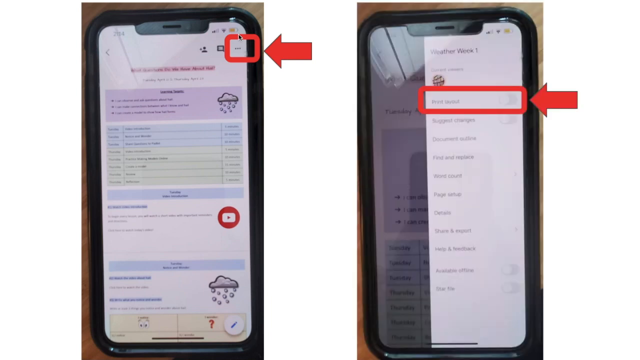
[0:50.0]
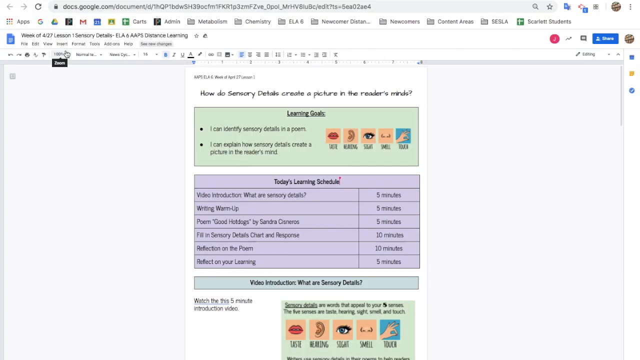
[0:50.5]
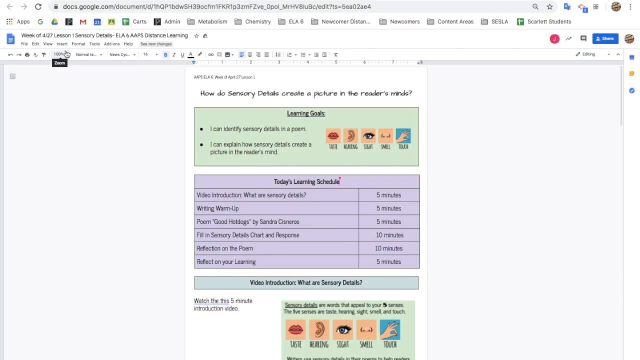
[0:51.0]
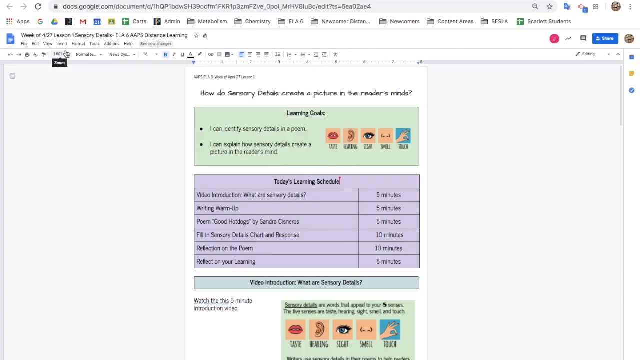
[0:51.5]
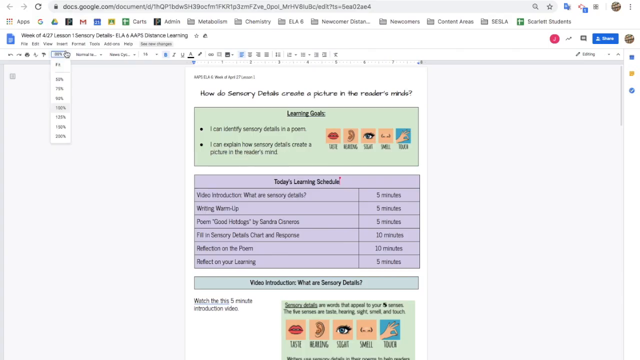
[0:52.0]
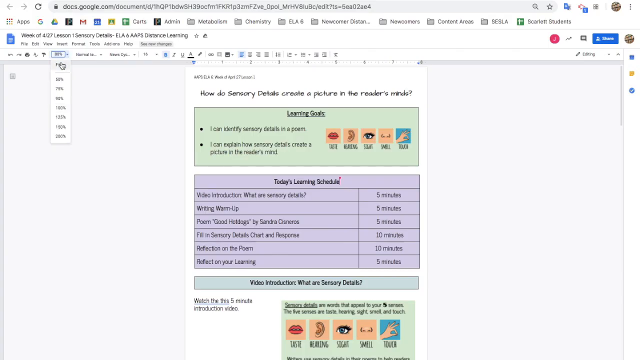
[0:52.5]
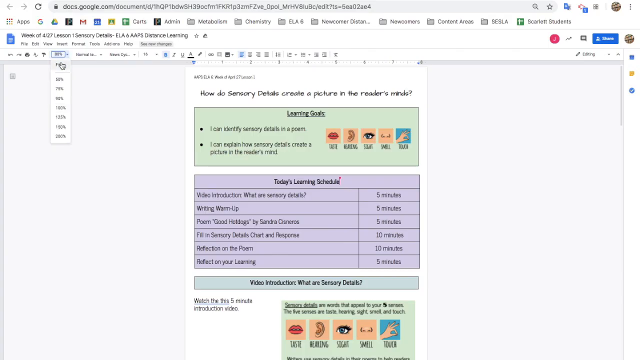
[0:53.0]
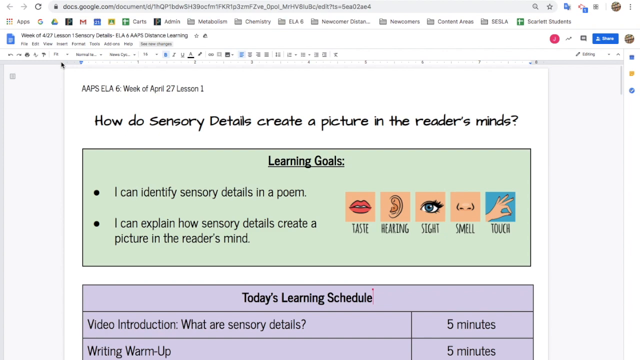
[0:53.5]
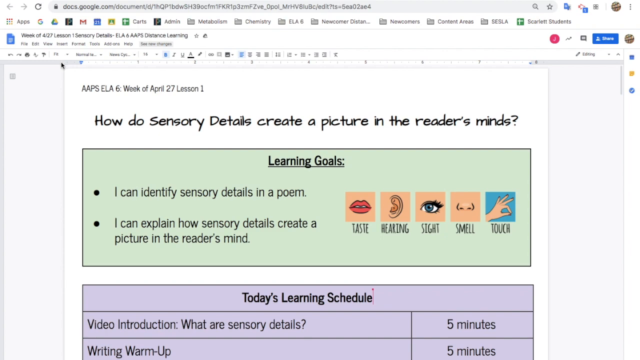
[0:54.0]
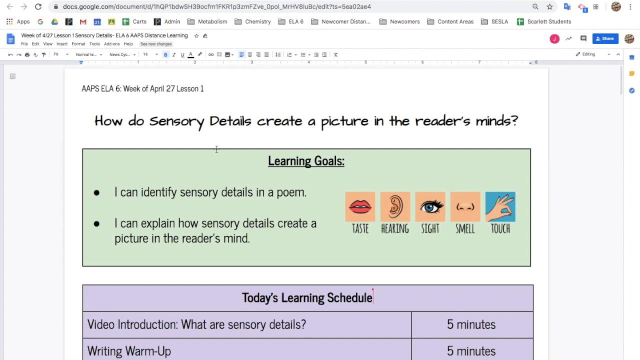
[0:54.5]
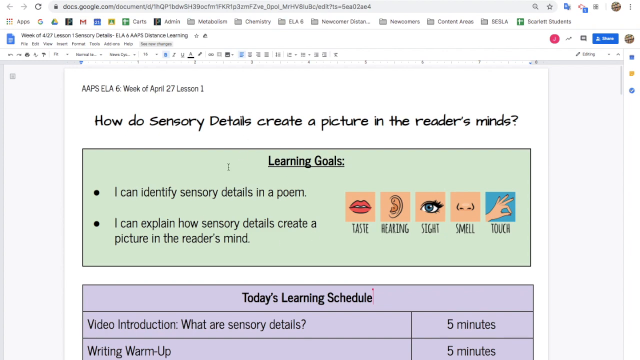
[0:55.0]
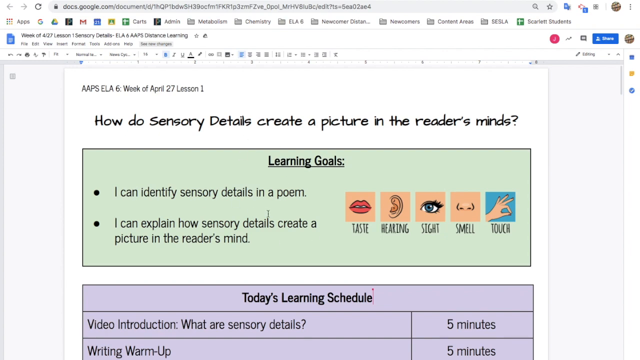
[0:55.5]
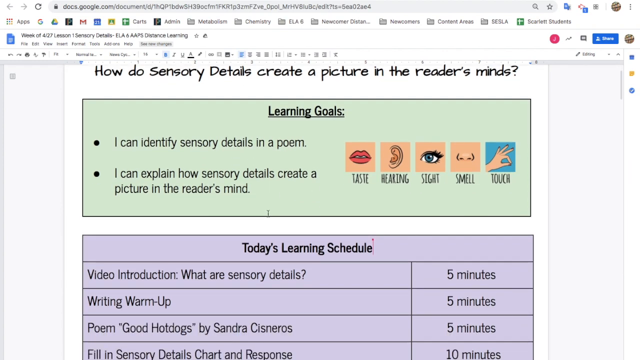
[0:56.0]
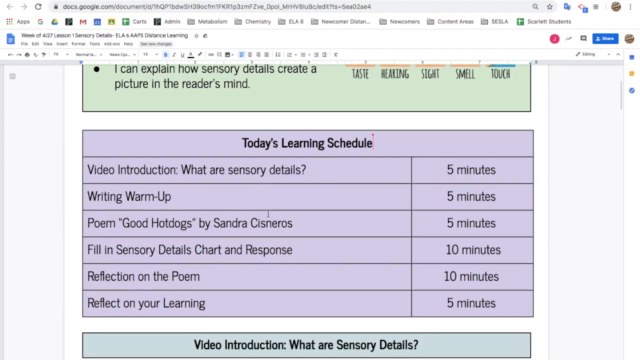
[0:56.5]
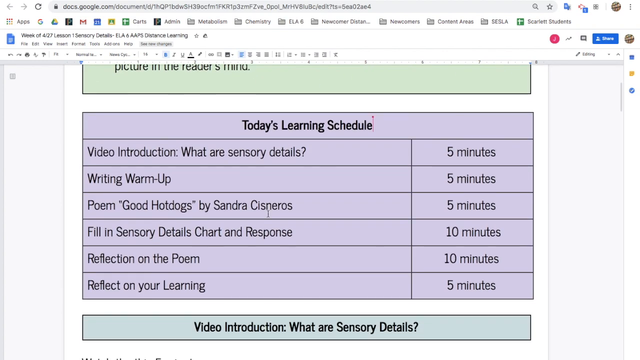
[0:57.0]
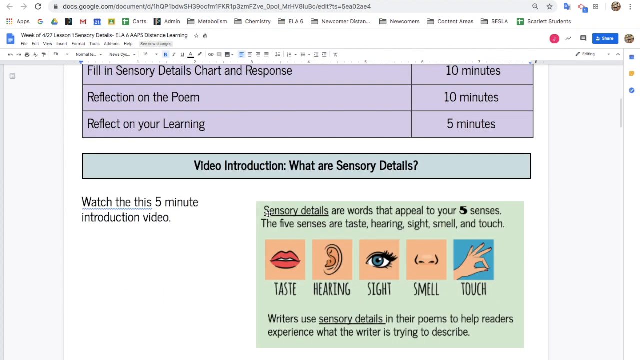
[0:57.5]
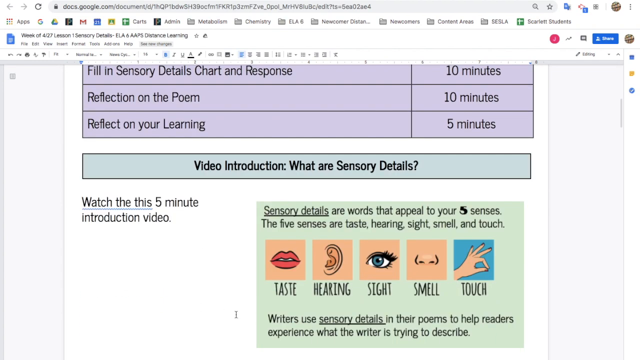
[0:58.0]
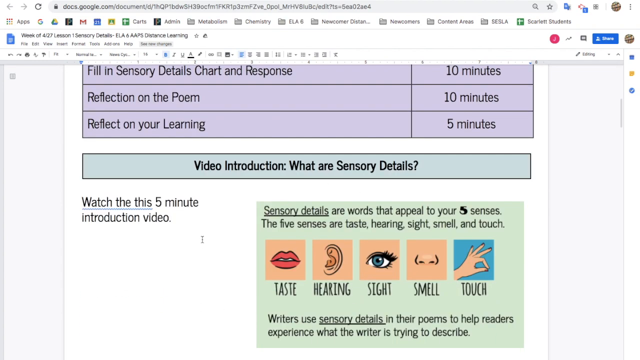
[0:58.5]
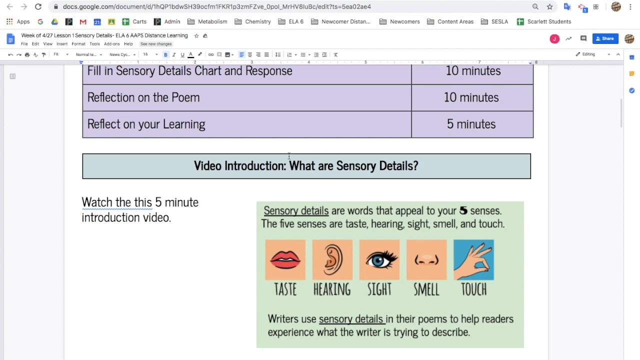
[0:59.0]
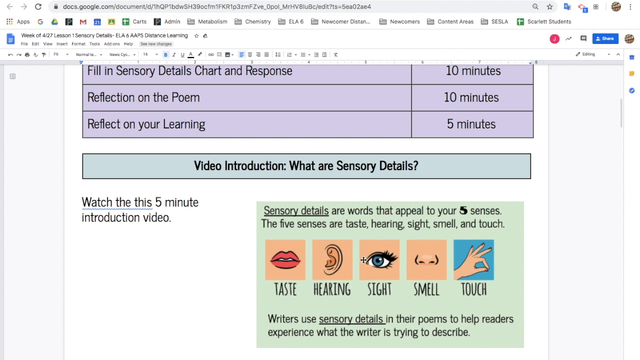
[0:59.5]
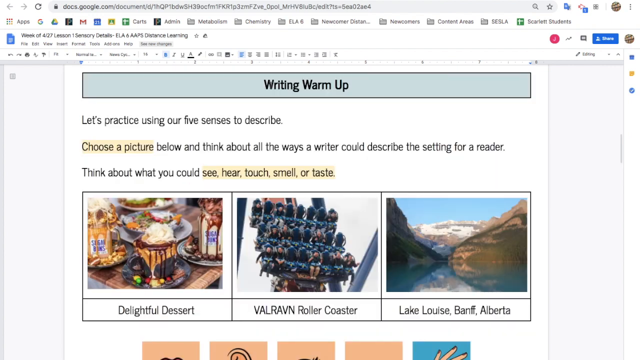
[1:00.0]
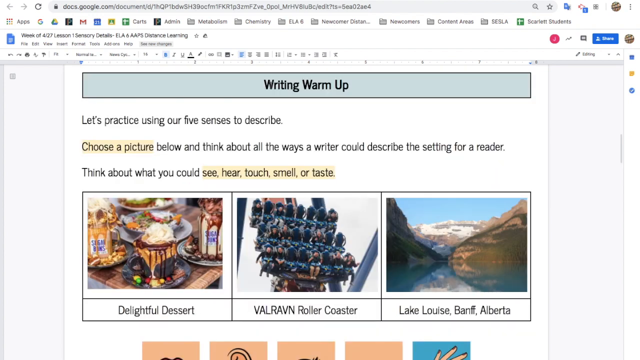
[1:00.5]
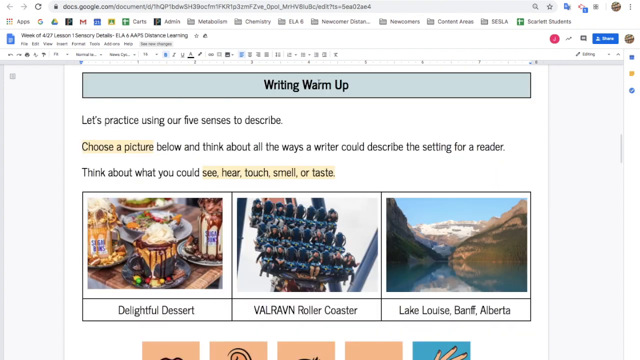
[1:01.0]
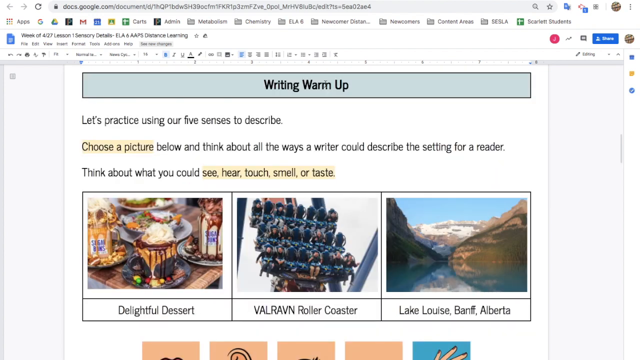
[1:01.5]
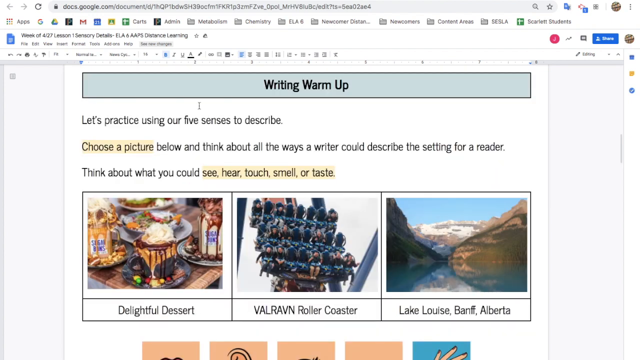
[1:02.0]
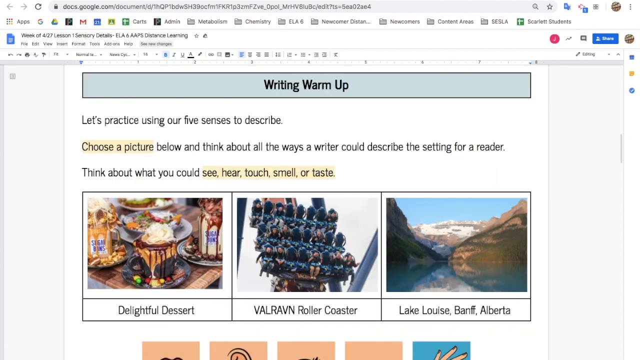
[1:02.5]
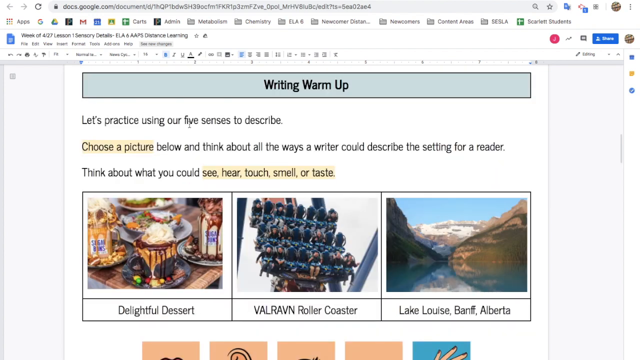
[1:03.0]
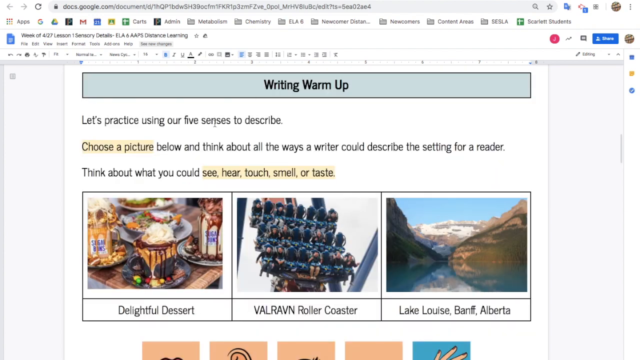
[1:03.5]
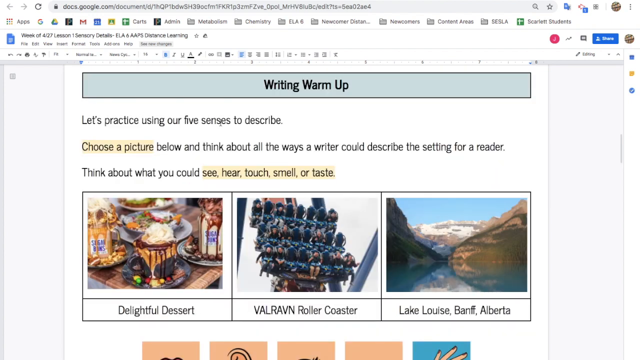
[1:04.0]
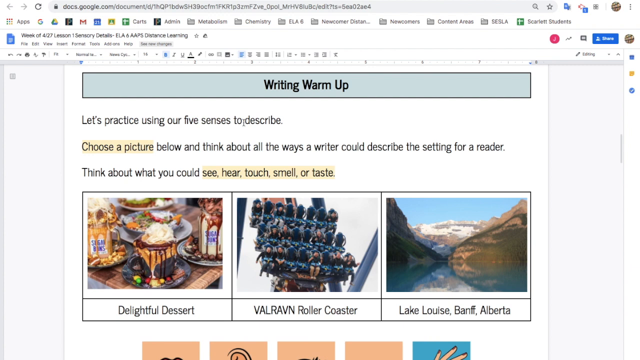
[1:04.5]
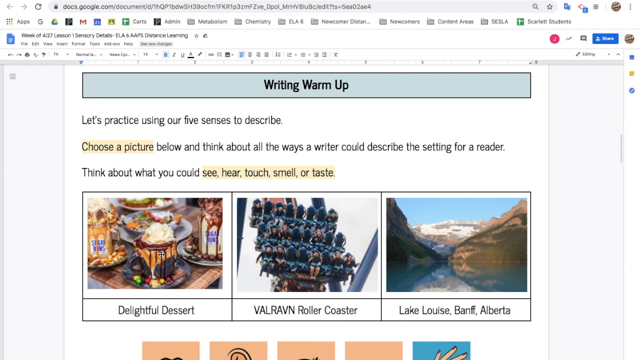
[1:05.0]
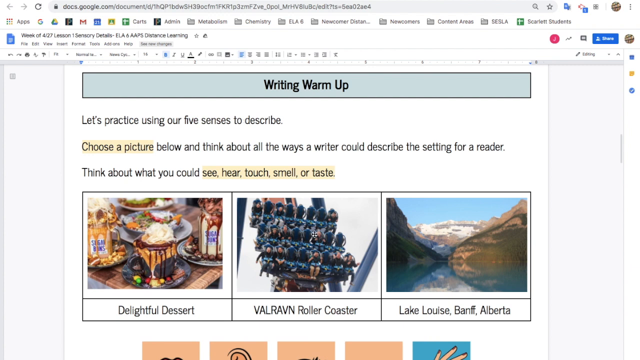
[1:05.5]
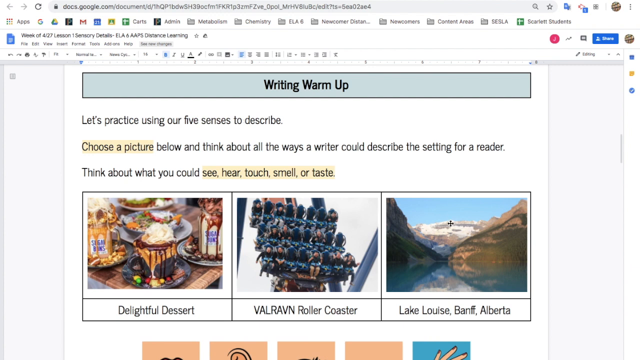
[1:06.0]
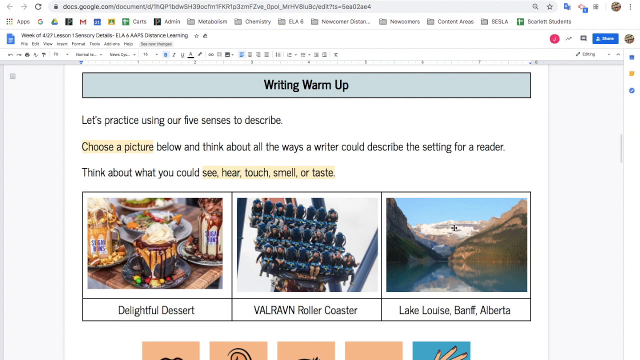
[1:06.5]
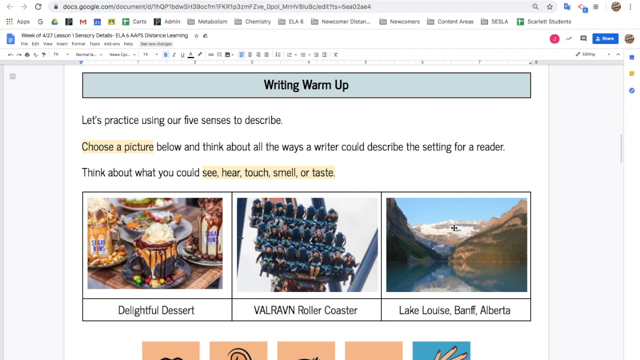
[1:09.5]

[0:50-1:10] The screen switches to a web browser page in Google Docs with black text and a few different sections: sensory details, learning goals, today's learning schedule, and a video introduction explaining what sensory details are. The view zooms in, kind of showing these sections in more detail. It then transitions to a screen that says "writing warm up," with text reading "lets practice using our 5 senses to describe" and three pictures visible. Text says "choose a picture below and think about all the ways a writer could describe the setting for a reader, think about what you see, hear, touch, smell, or taste." The video continues to kind of show this page and pans down, showing the five senses. No physical subjects are shown.